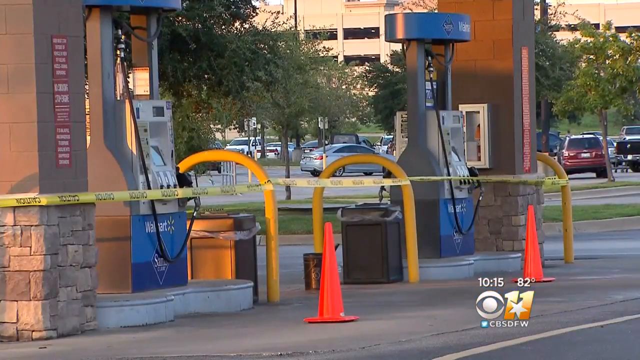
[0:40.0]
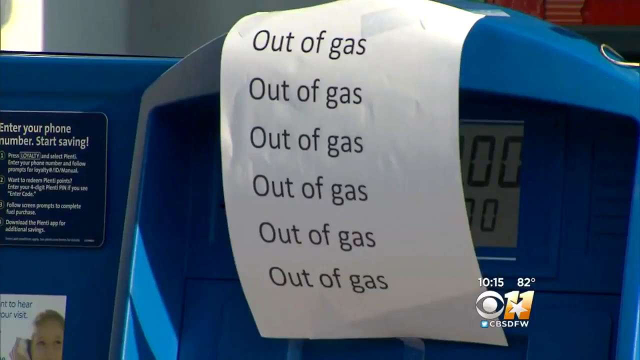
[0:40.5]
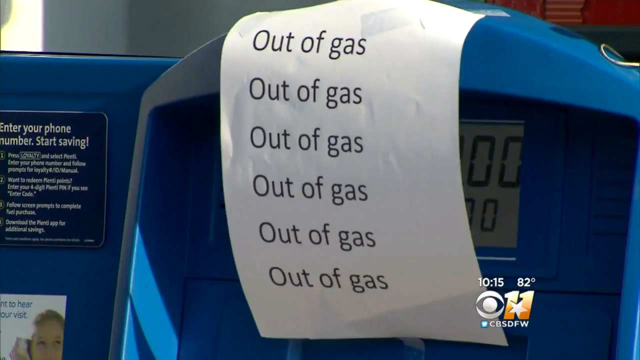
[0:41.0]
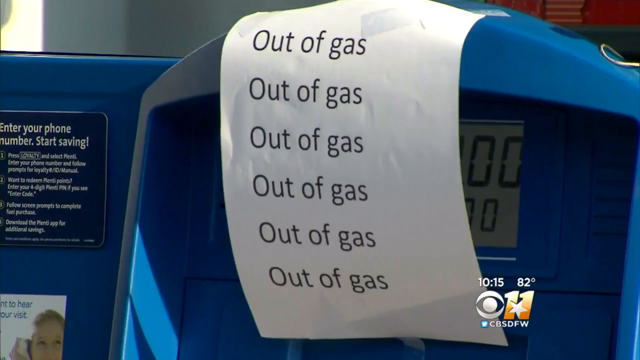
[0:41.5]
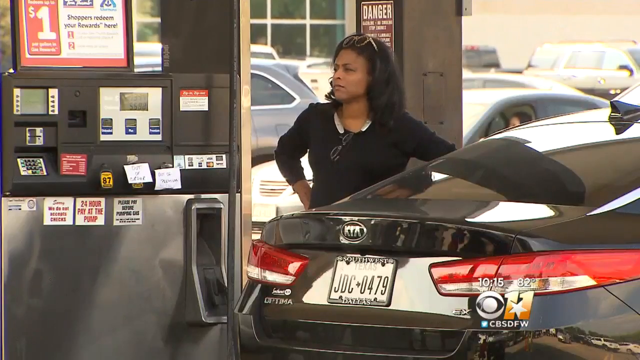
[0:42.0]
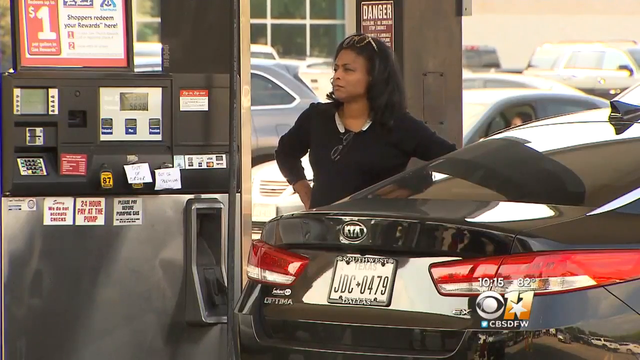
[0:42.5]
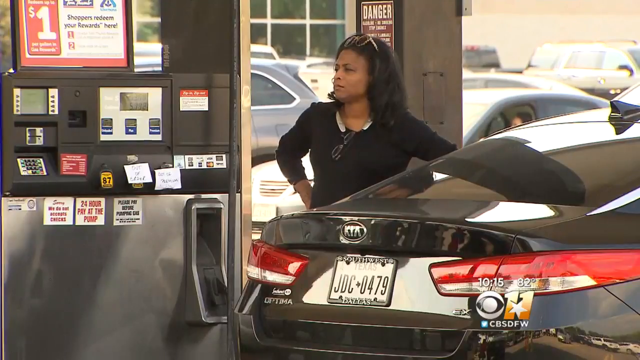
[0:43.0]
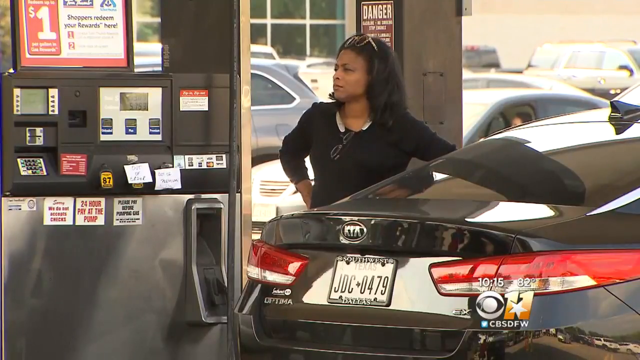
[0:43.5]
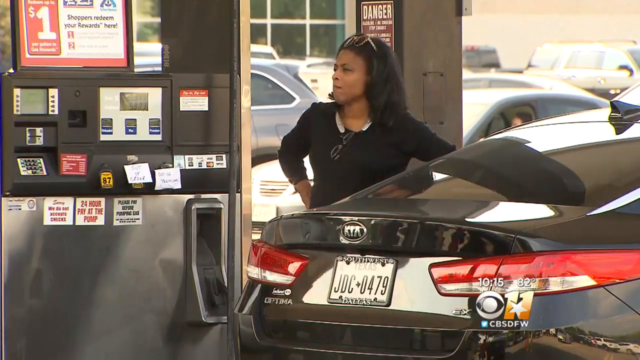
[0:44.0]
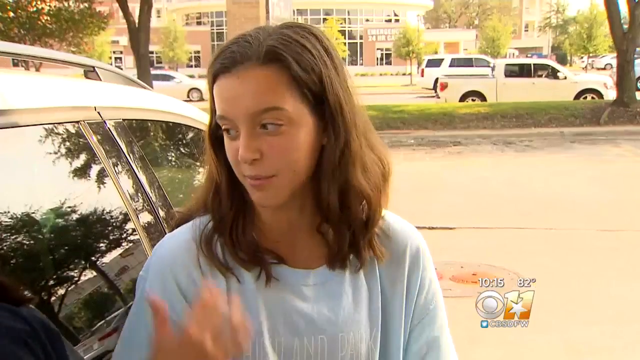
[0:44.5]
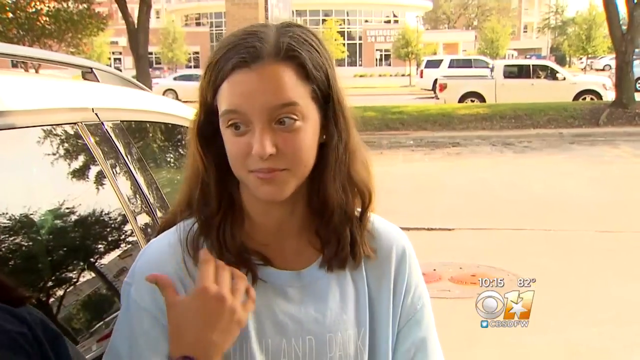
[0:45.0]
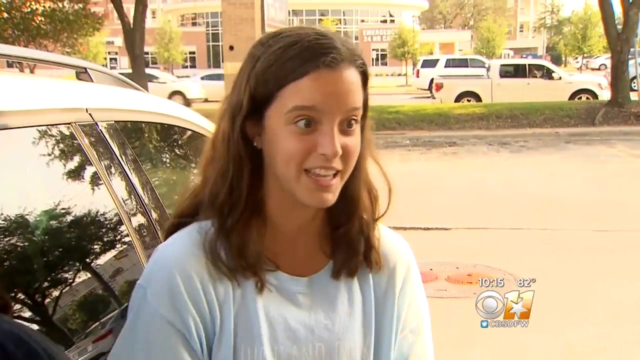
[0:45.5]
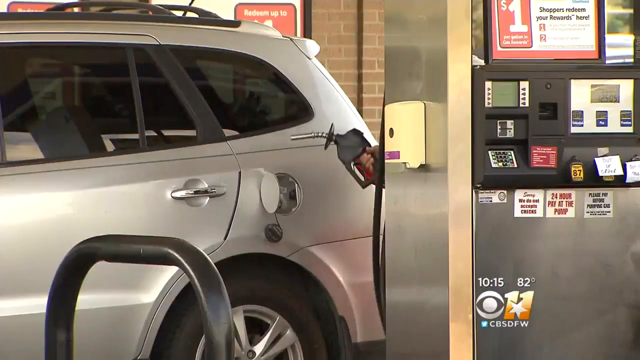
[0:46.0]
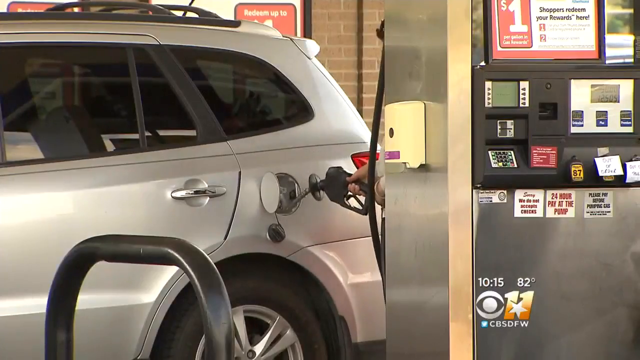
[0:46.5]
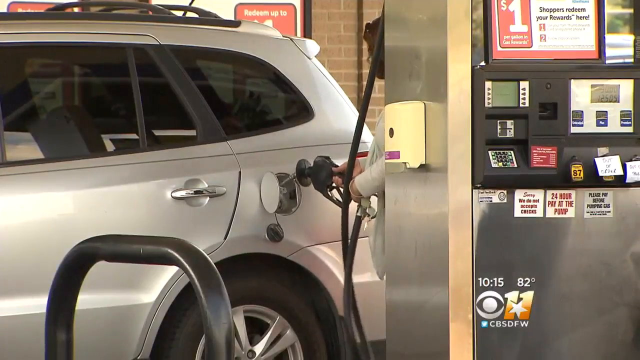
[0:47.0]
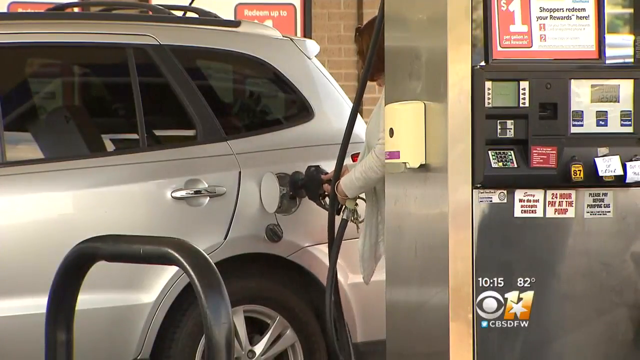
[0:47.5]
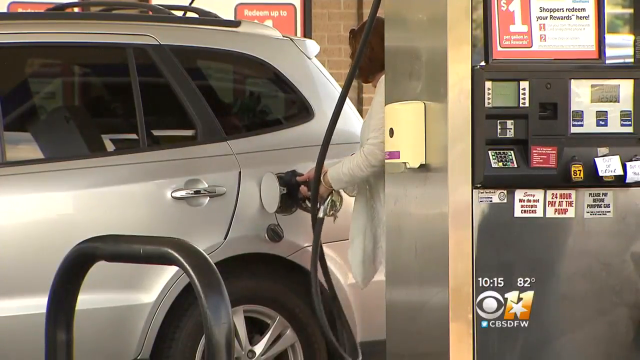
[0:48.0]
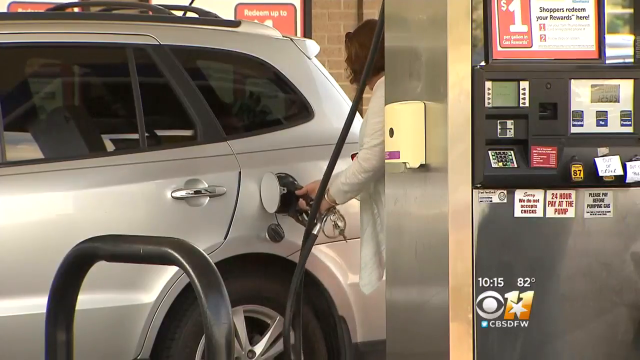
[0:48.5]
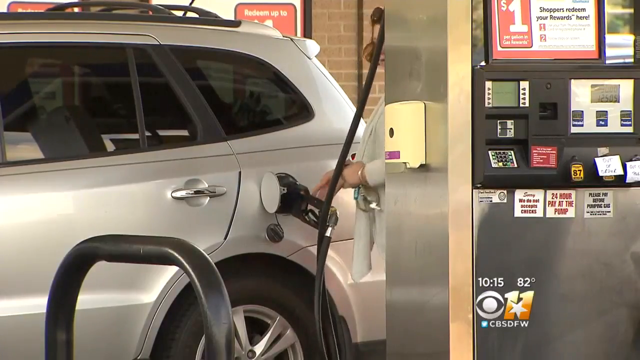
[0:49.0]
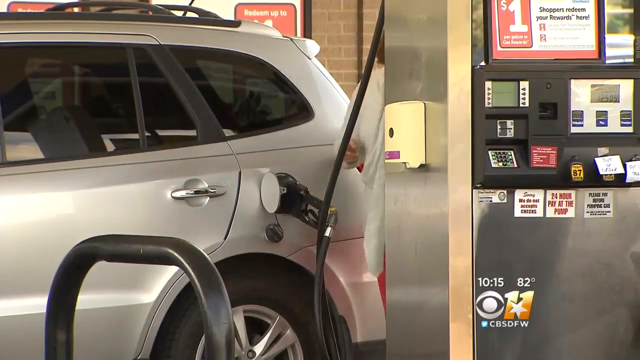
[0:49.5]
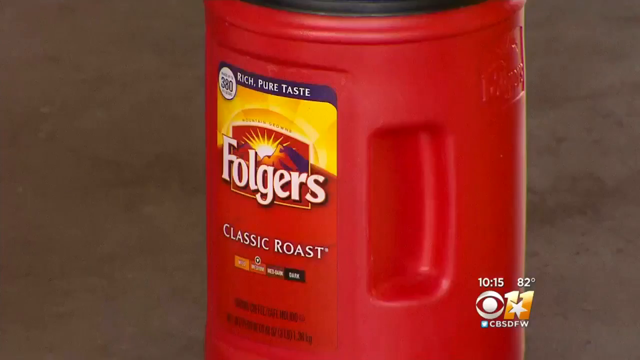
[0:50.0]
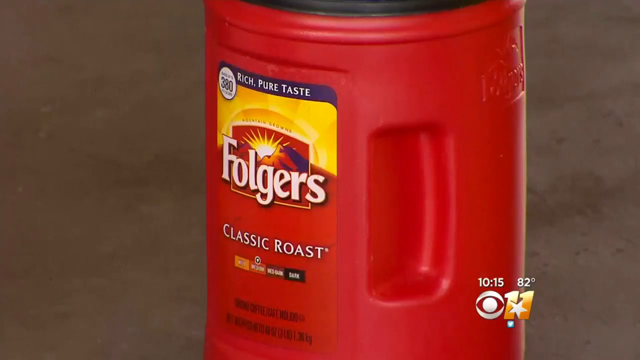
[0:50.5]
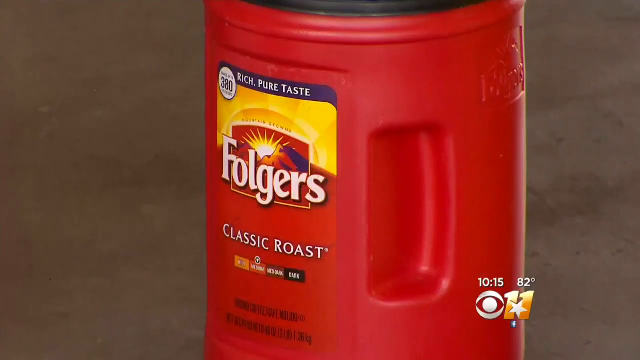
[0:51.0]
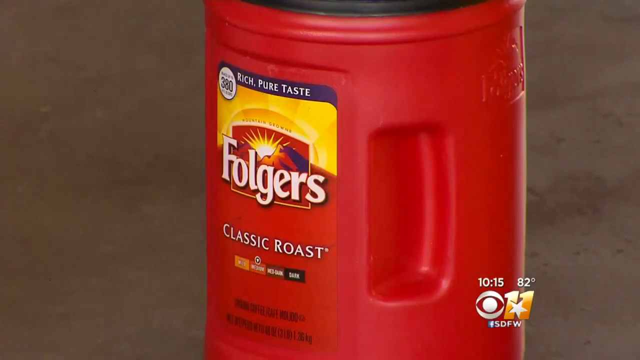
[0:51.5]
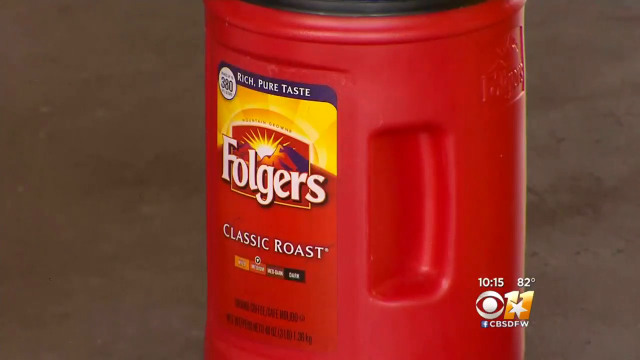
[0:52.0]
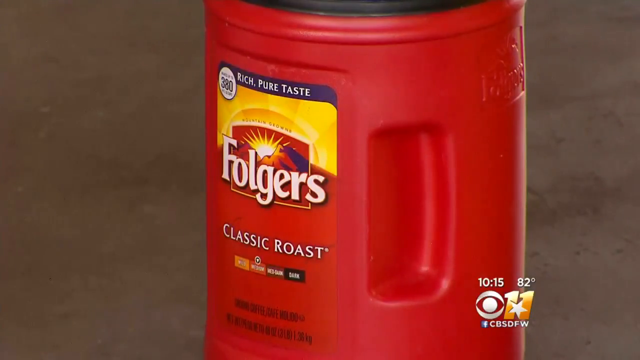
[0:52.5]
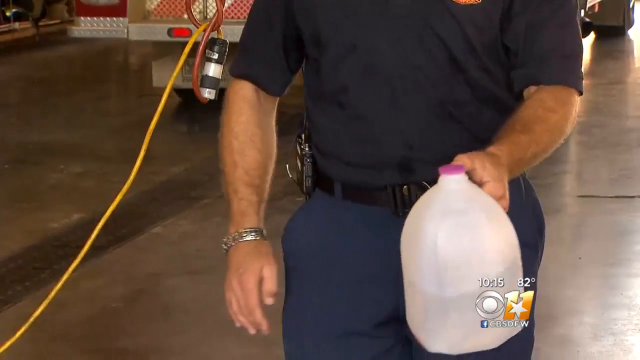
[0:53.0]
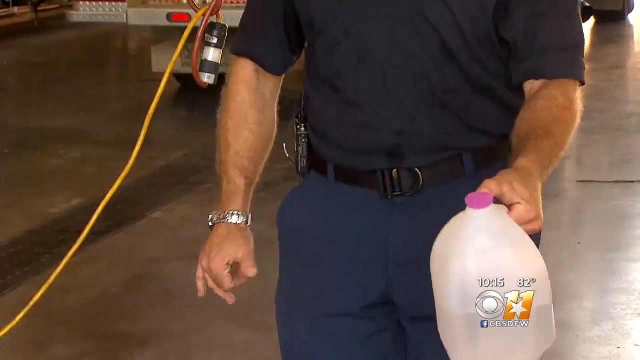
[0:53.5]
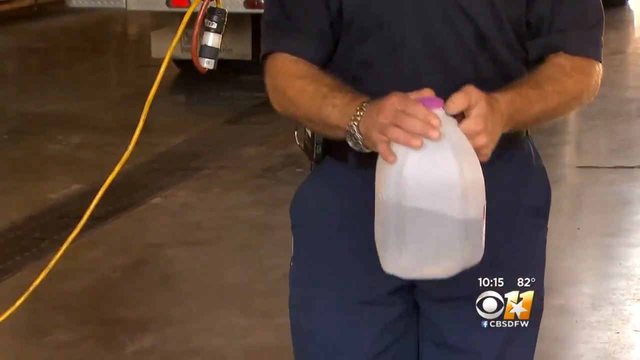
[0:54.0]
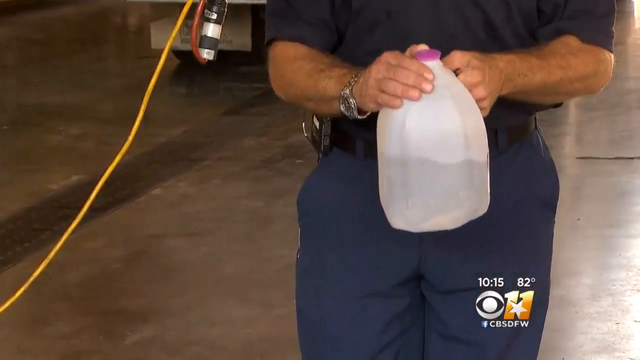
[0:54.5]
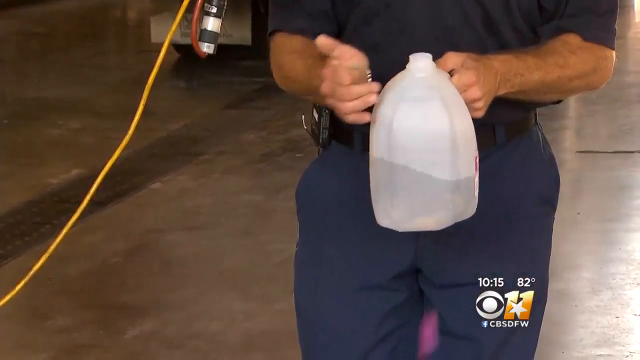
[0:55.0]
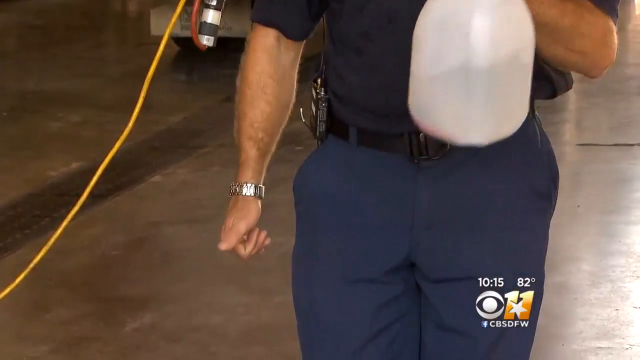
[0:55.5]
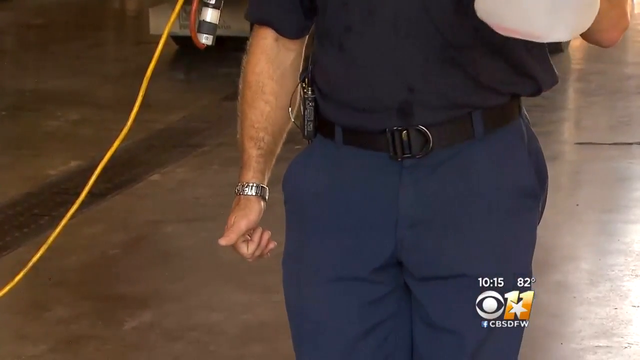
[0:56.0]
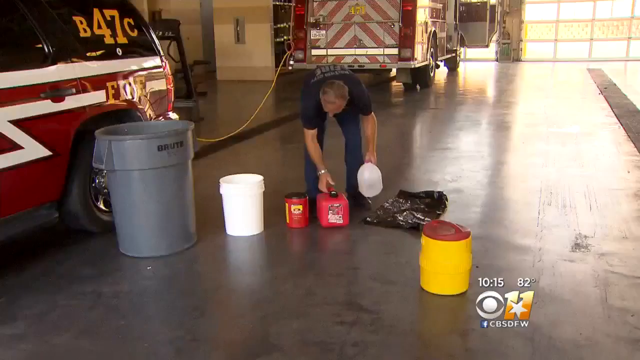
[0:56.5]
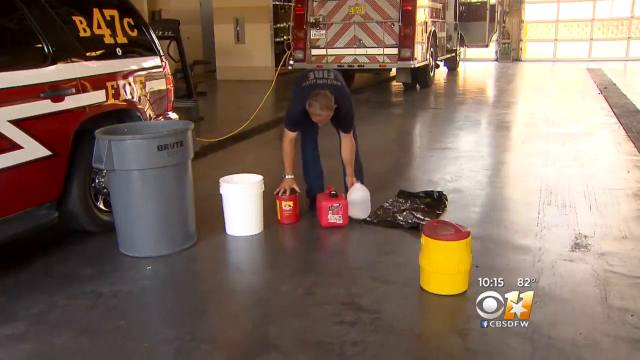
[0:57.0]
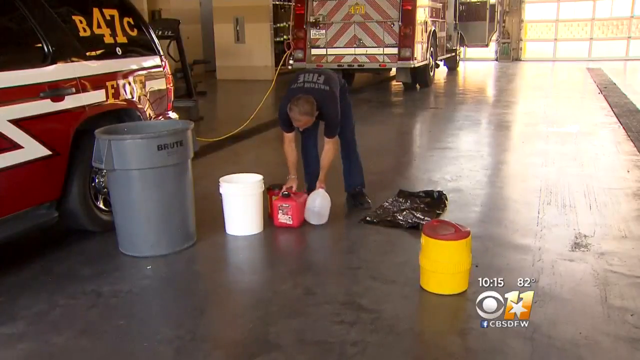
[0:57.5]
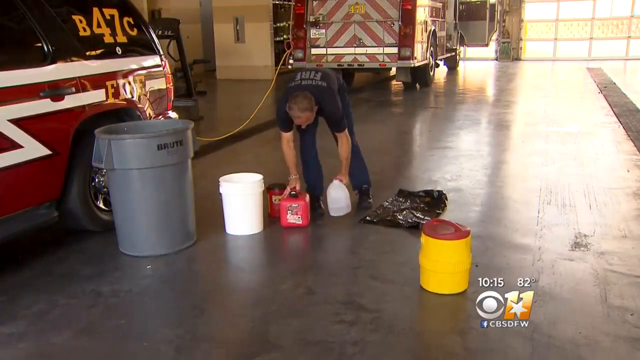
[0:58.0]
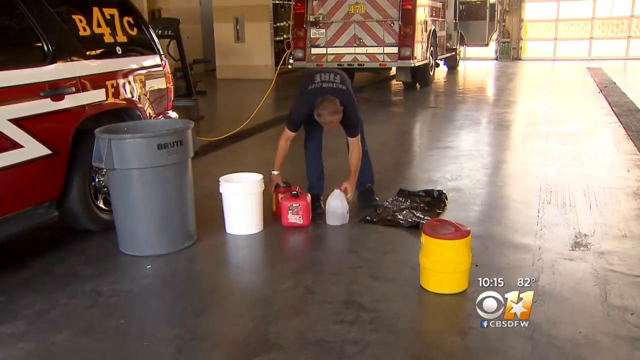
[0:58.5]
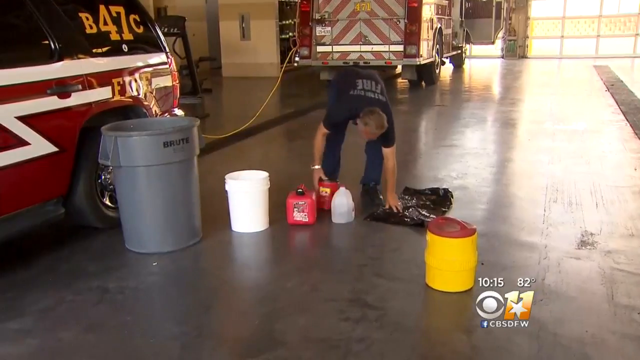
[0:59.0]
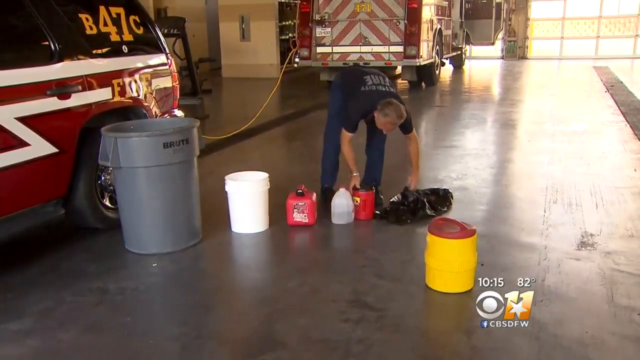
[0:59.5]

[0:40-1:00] An empty gas station has yellow caution tape wrapped around the pumps and orange cones in front of them. A CBS 11 logo is in the bottom right-hand corner of the screen. Next comes an image of a gas pump with a paper on it reading "out of gas." Footage from a different time then shows a customer pumping gas into a Kia, standing by the pump and her car while the news camera records her from a distance. A young woman with brown hair is interviewed at the gas station, followed by more footage of random customers pumping gas. Next, a fireman in a fire station opens a container of water and sets it on the ground in front of him.